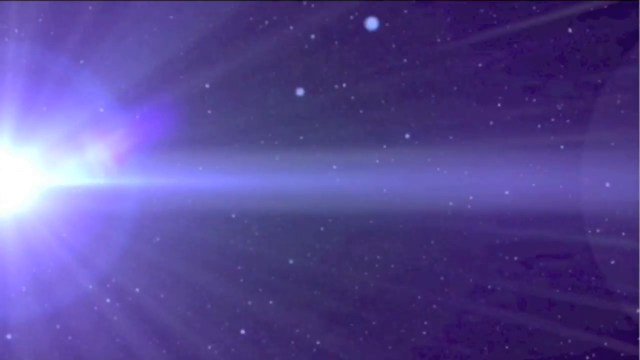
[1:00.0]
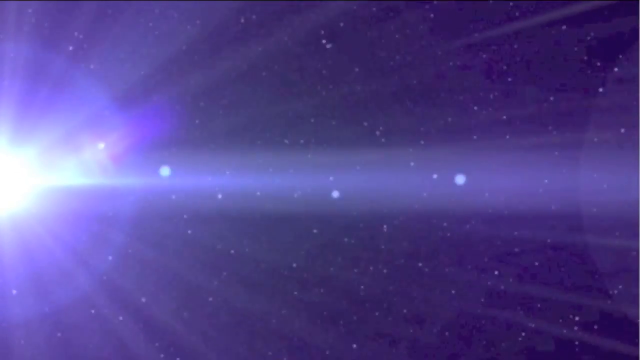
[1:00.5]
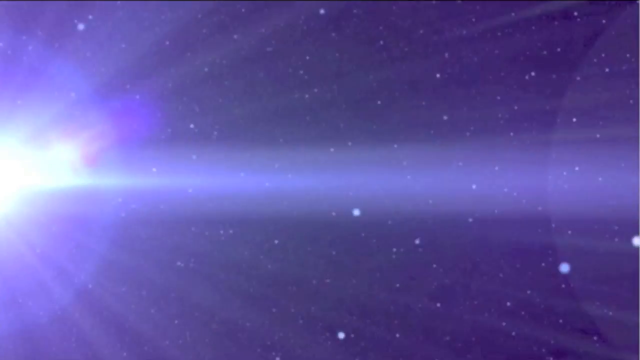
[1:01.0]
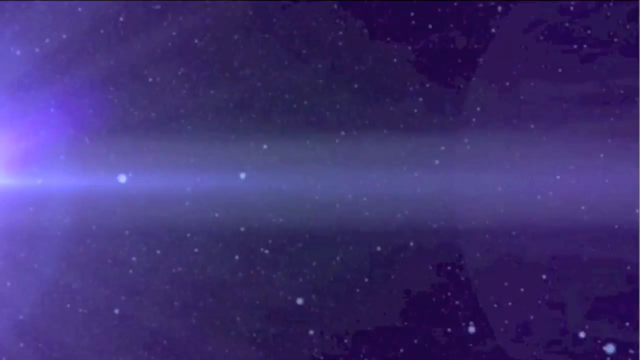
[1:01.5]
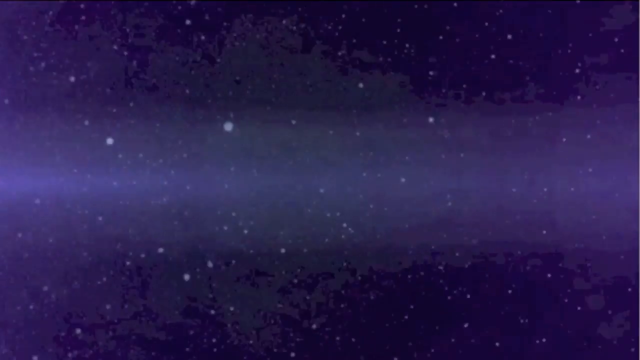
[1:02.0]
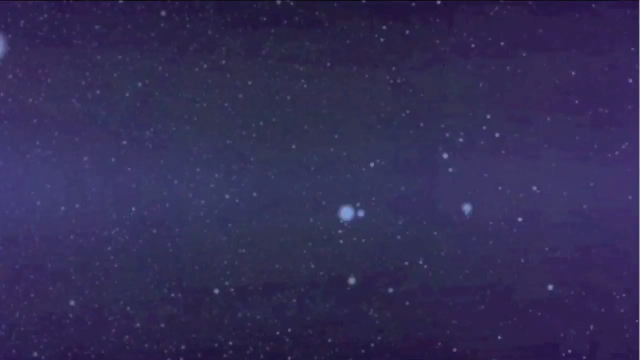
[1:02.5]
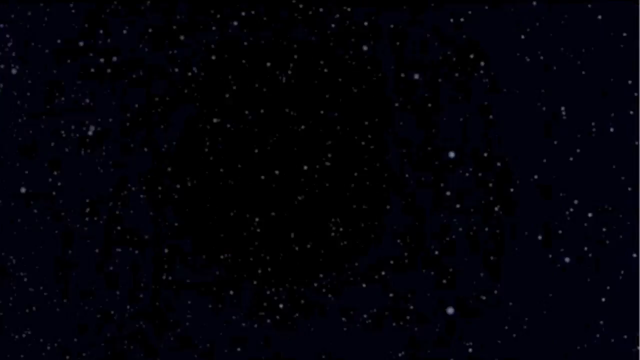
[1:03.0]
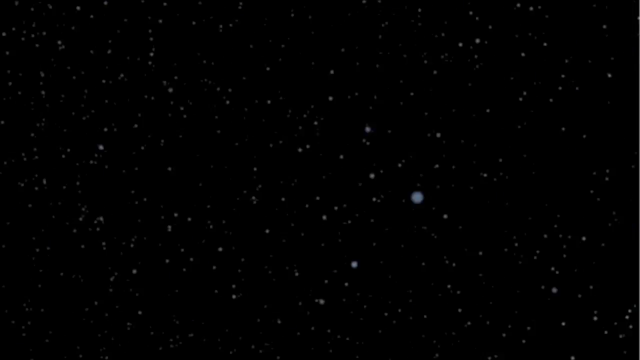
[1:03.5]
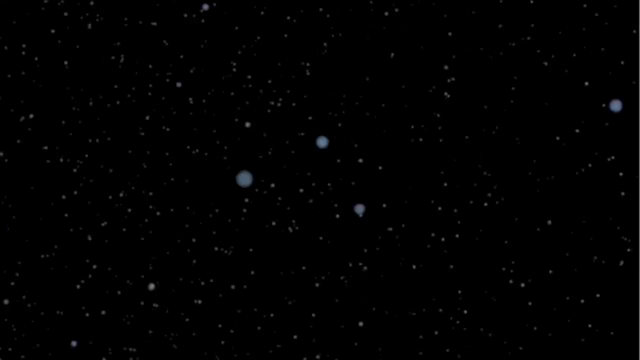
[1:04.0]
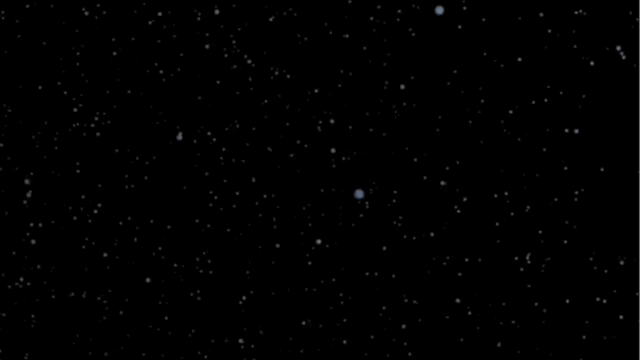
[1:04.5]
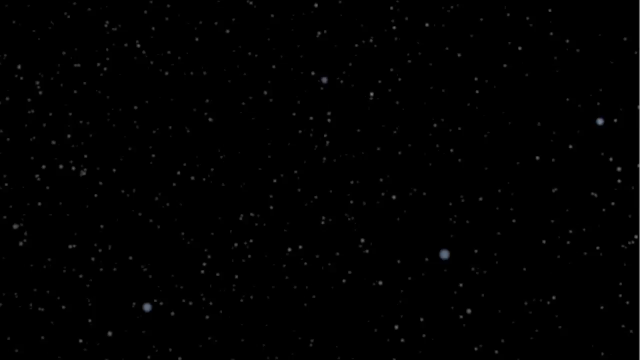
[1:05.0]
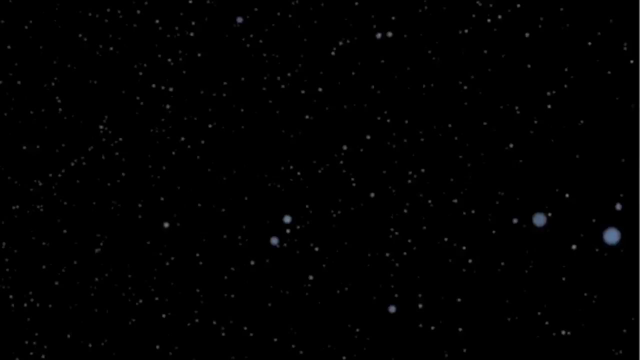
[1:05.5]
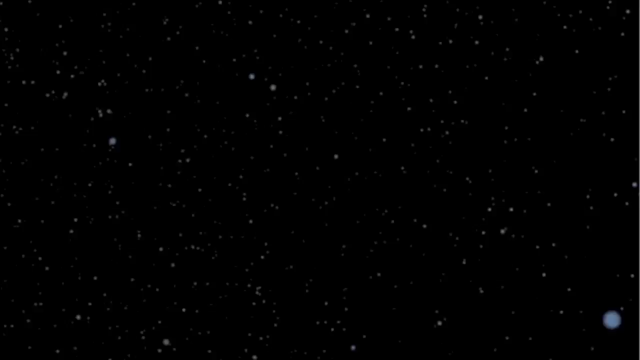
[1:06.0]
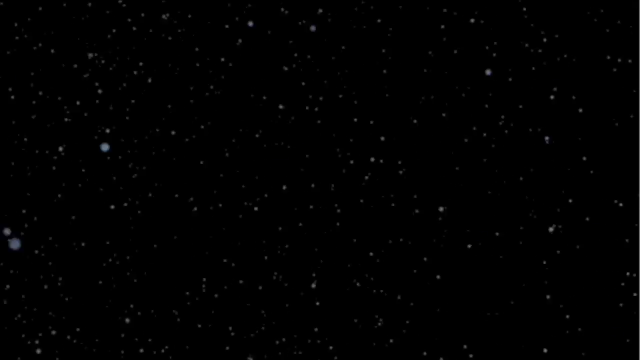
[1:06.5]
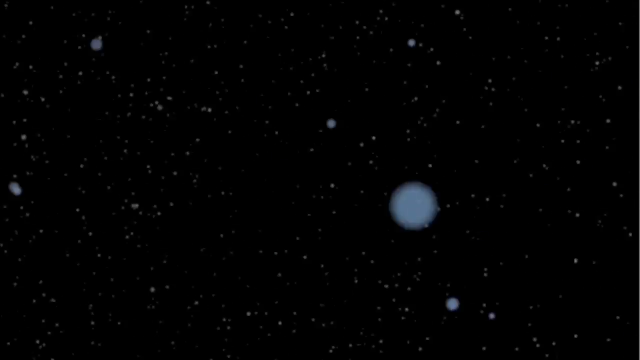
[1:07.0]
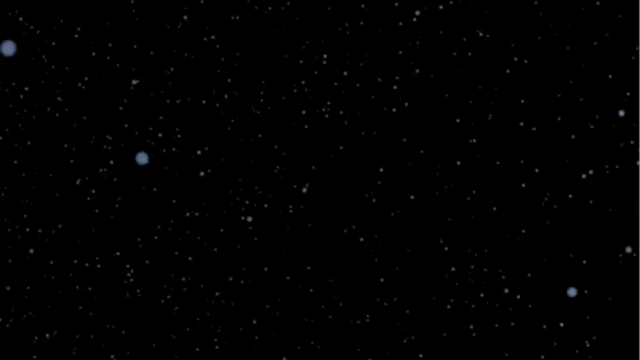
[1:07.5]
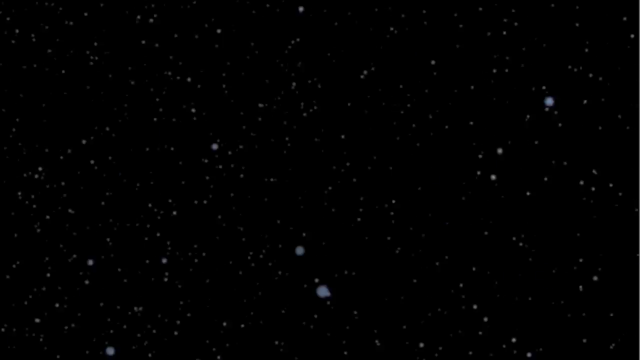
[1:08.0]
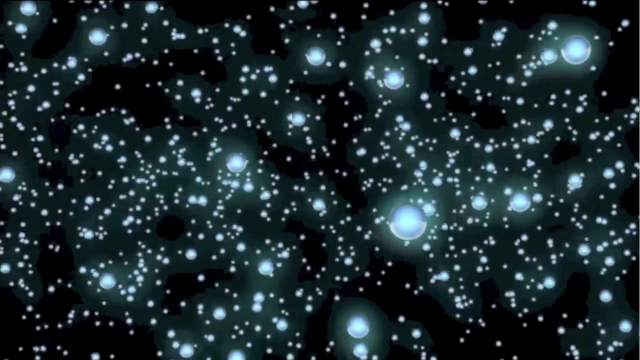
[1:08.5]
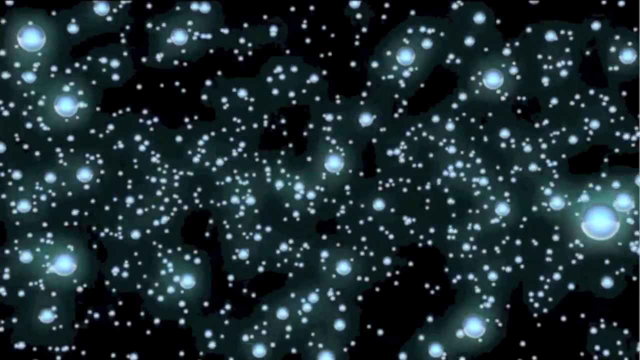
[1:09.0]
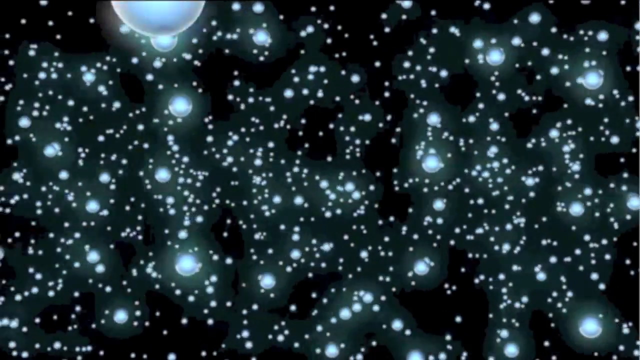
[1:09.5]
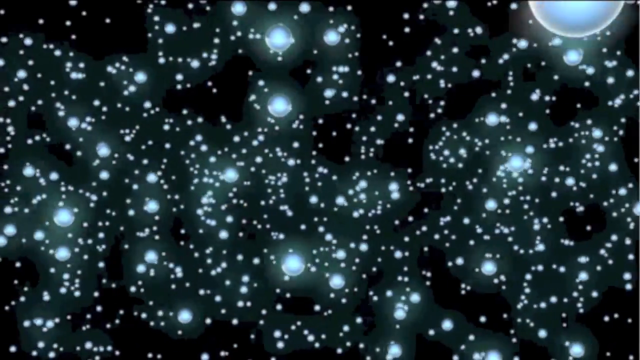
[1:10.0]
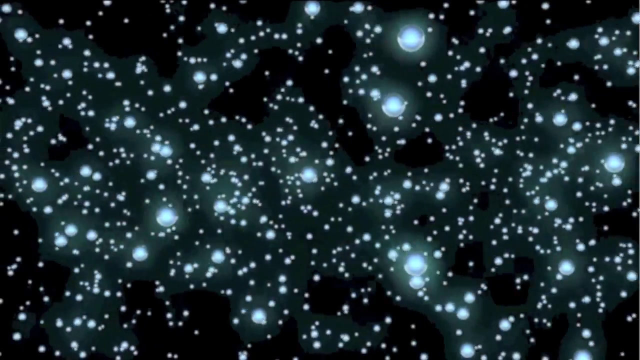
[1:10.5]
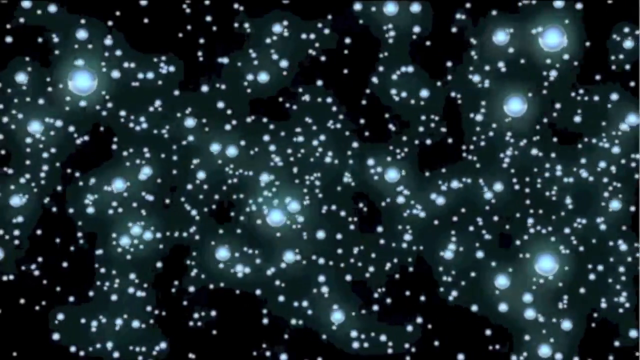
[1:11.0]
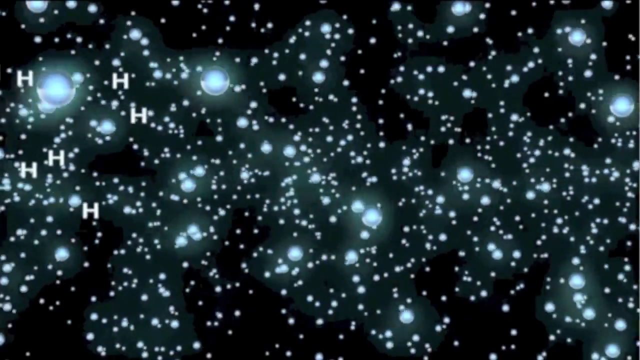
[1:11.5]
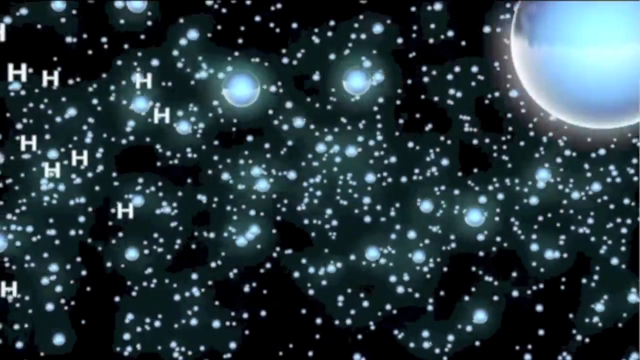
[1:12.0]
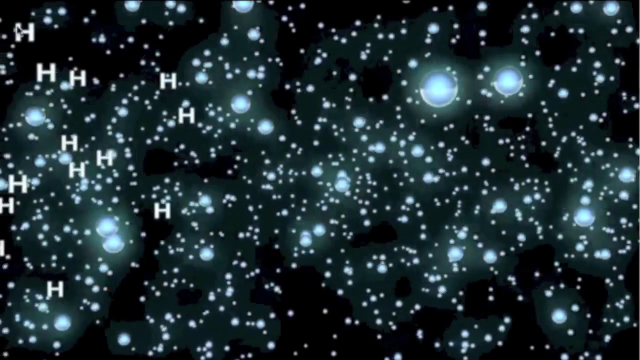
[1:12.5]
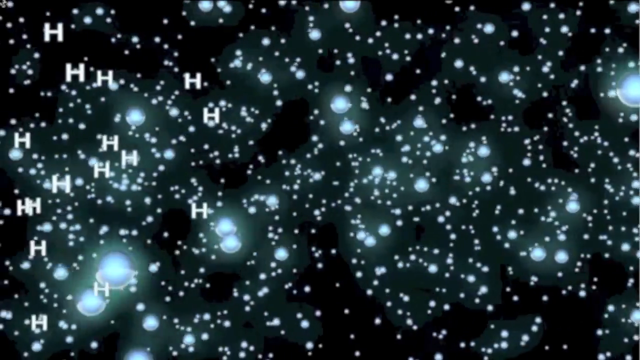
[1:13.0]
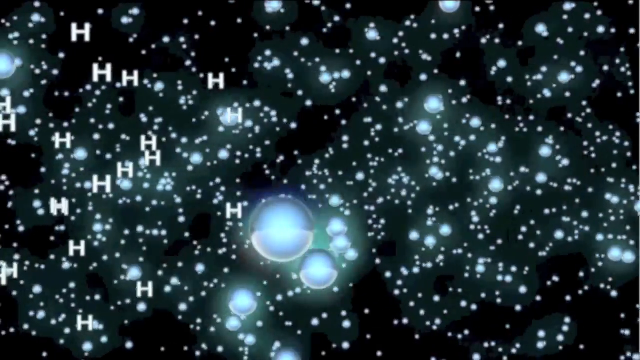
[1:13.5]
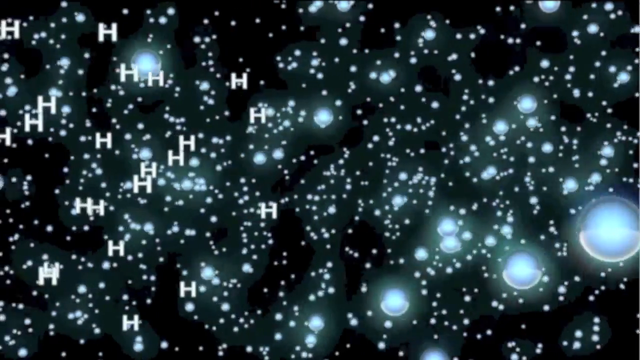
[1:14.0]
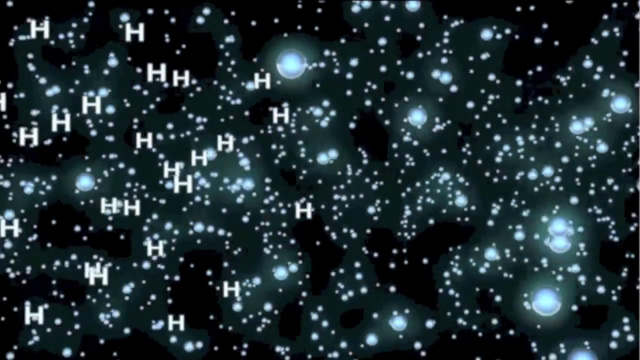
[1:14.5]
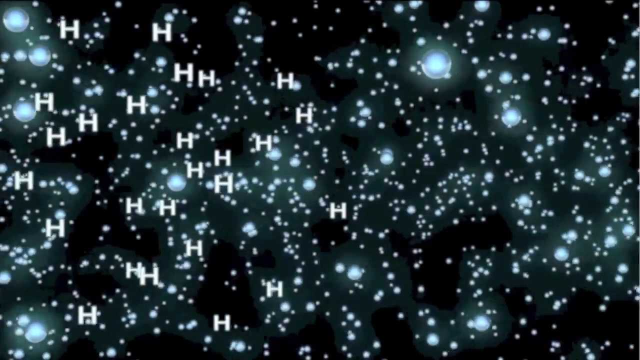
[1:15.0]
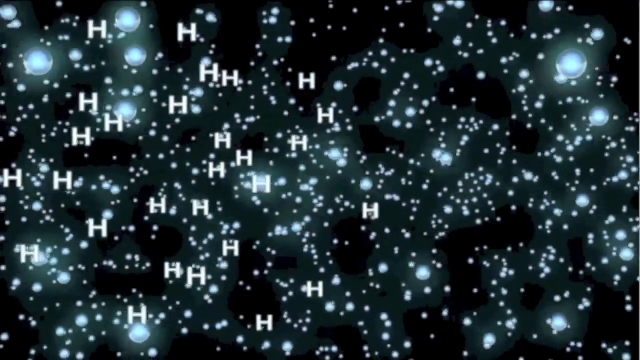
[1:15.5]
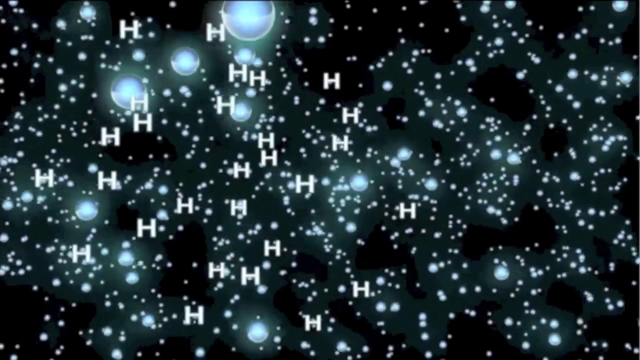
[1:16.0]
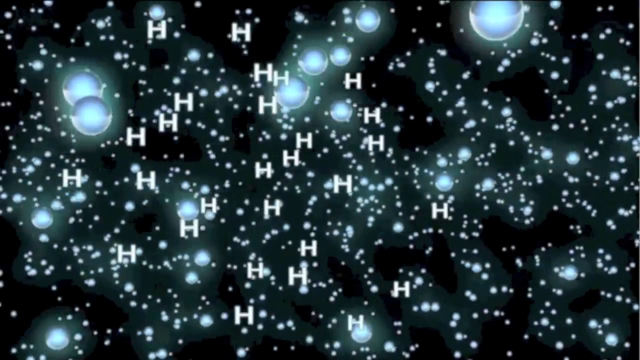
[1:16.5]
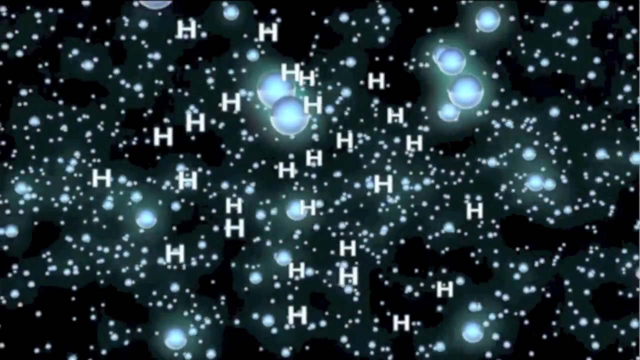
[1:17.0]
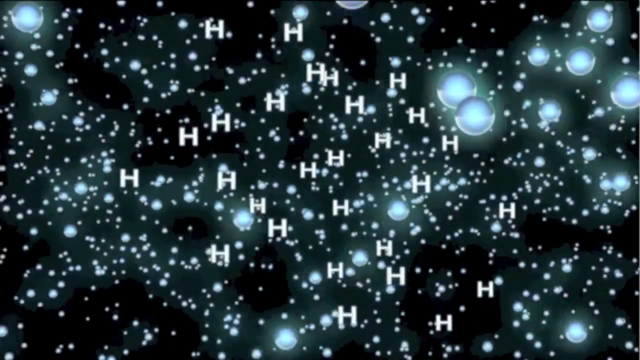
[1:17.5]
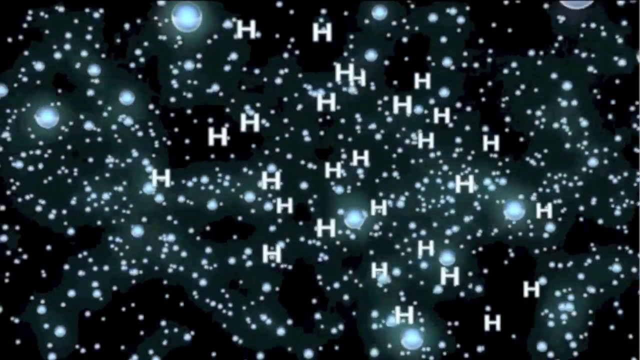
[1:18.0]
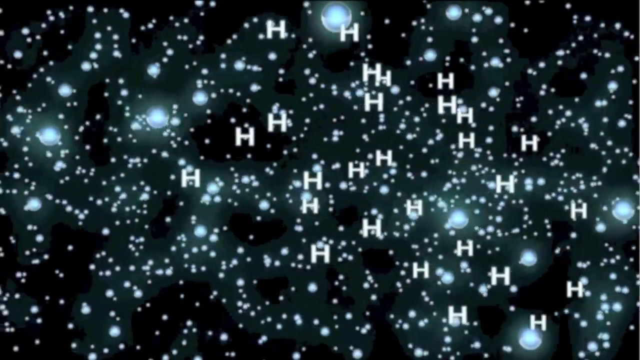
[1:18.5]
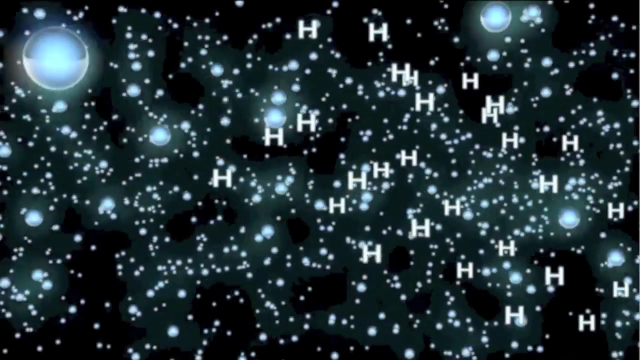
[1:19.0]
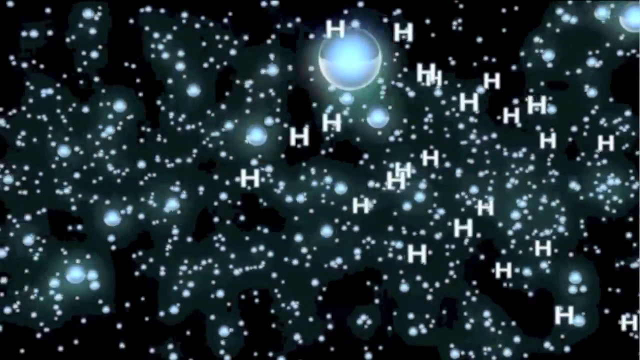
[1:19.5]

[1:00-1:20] A 3D rendering of space shows a large white lens flare on the left side, presumably from the sun. Multiple white dots seem to travel quickly outward from the lens flare, from the left of the screen to the right. The screen and lens flare shift to the right and the lens flare disappears. The background goes from light purple to a darker black while the white dots keep traveling quickly from left to right. Suddenly the dots start glowing blue and slow down visually. Letters begin replacing some of the dots: a white capital "H" over and over, then new letters reading "He," a capital H and lowercase e together, so there is a mixture of "H" and "He."